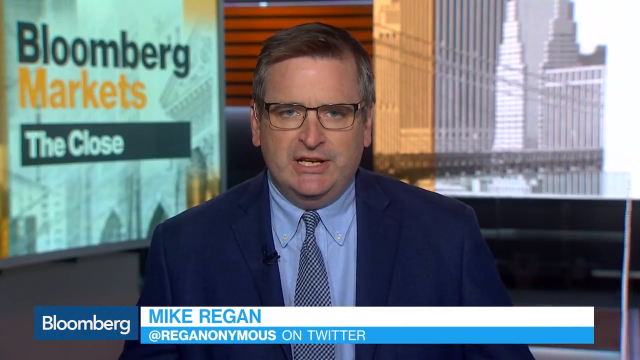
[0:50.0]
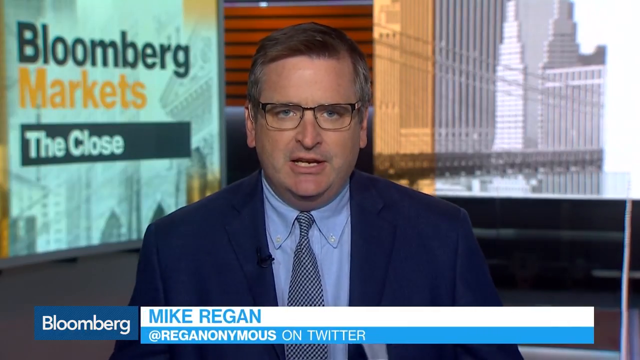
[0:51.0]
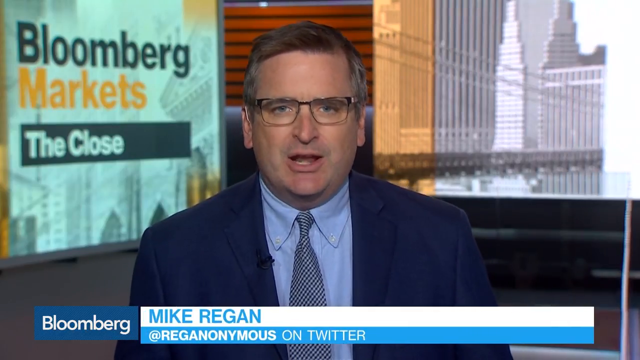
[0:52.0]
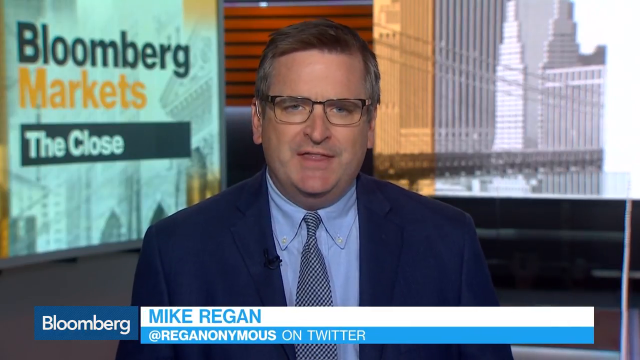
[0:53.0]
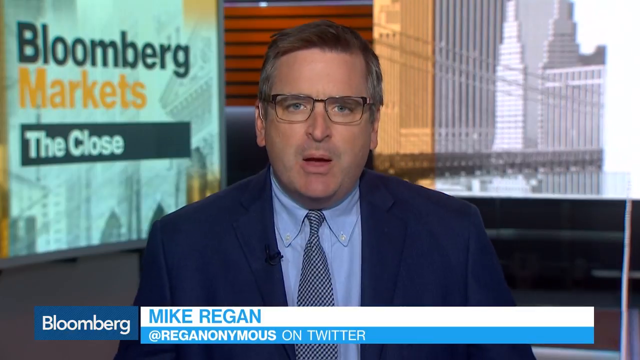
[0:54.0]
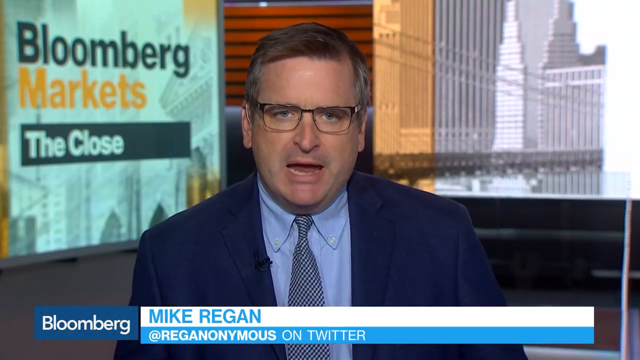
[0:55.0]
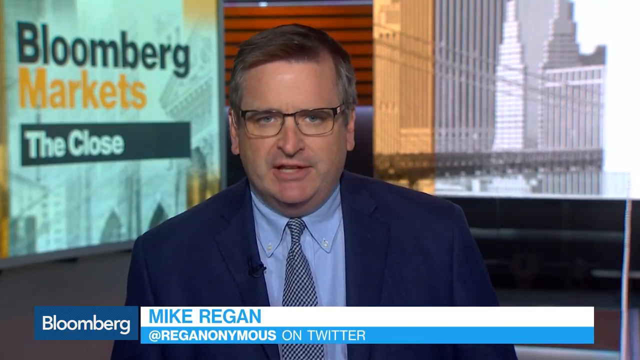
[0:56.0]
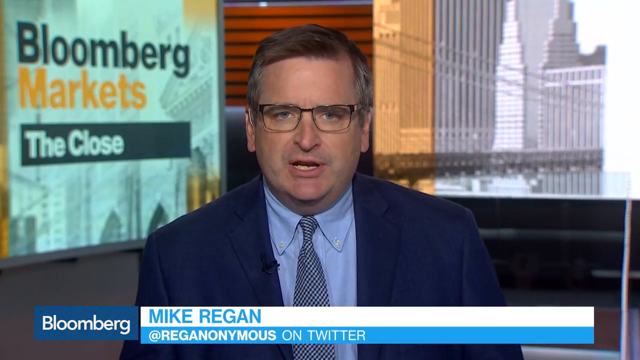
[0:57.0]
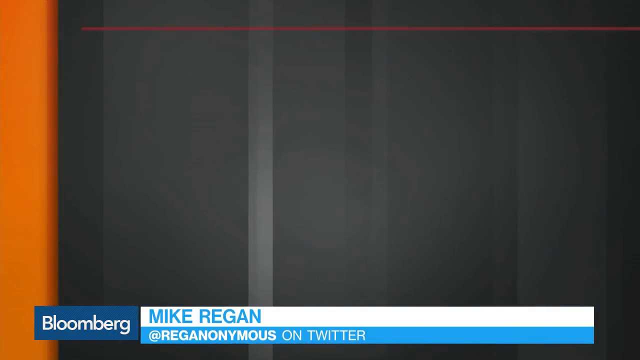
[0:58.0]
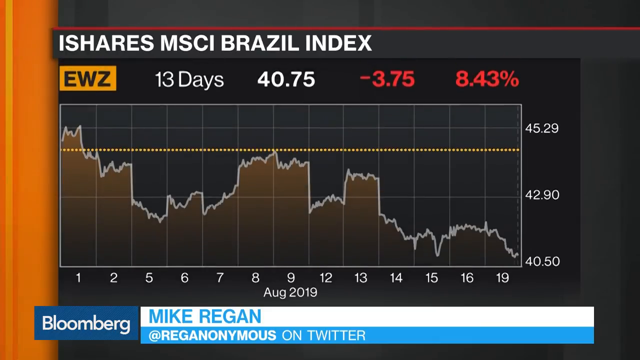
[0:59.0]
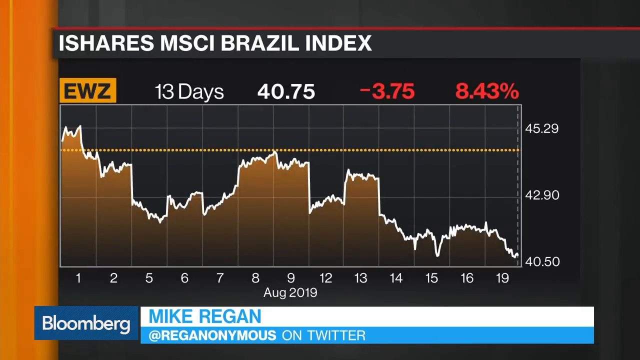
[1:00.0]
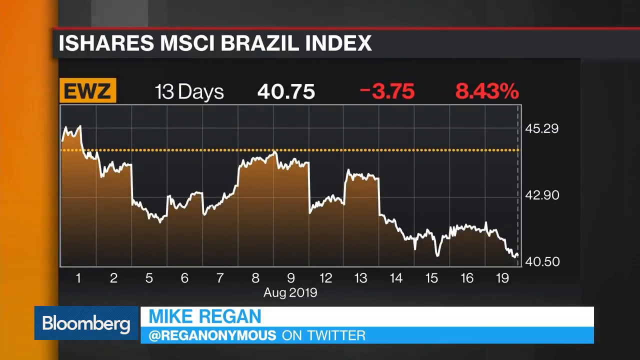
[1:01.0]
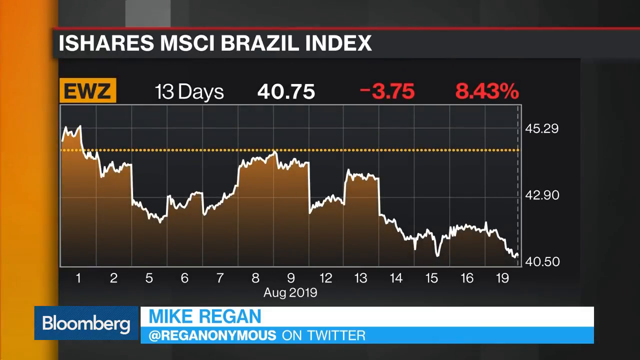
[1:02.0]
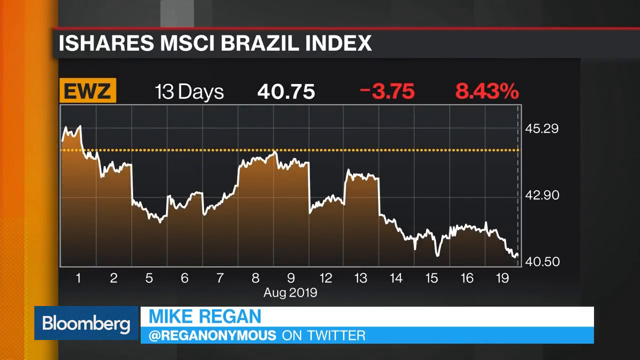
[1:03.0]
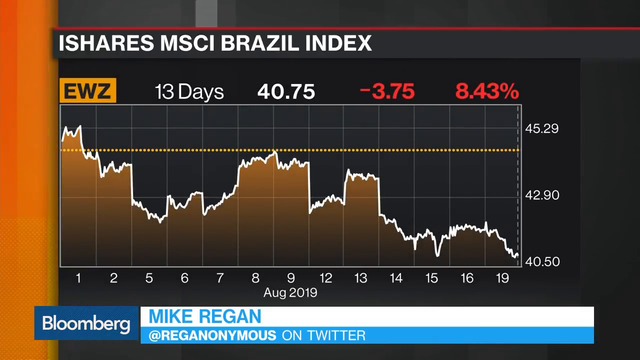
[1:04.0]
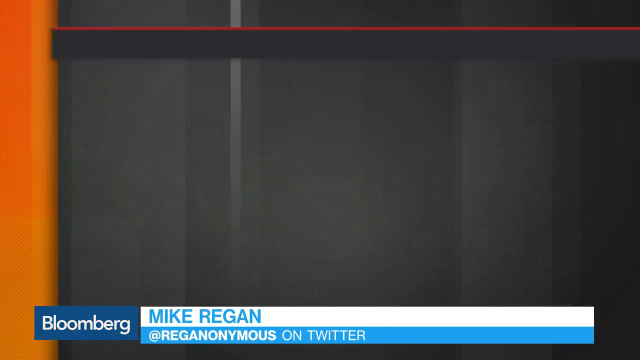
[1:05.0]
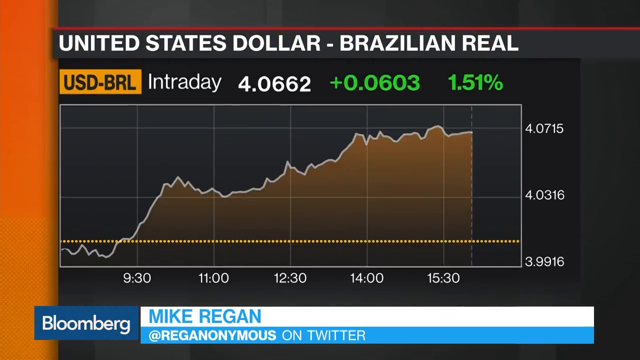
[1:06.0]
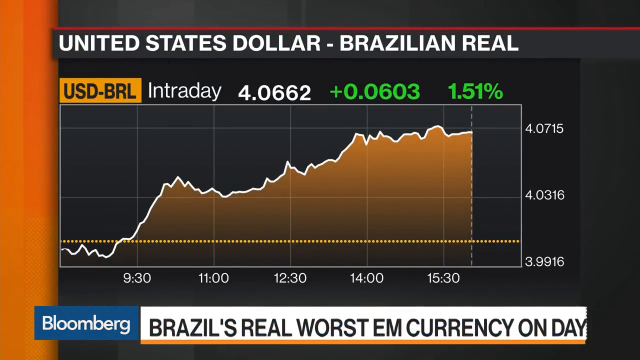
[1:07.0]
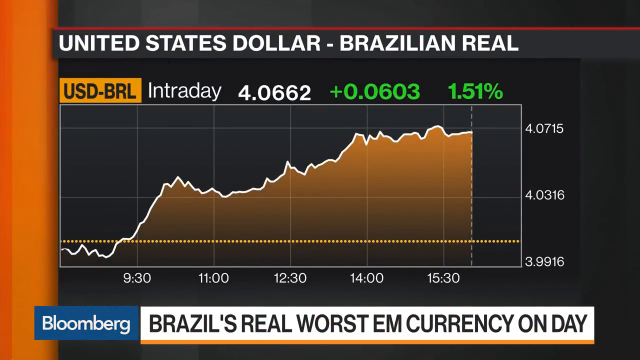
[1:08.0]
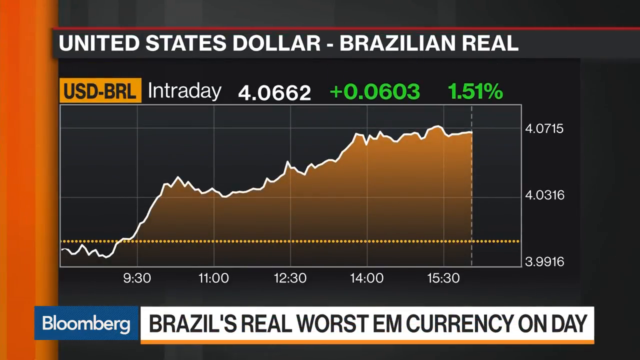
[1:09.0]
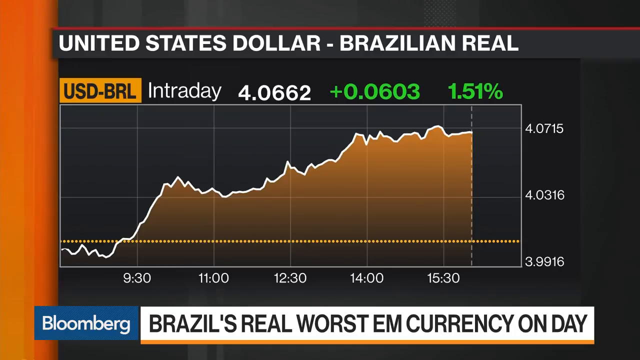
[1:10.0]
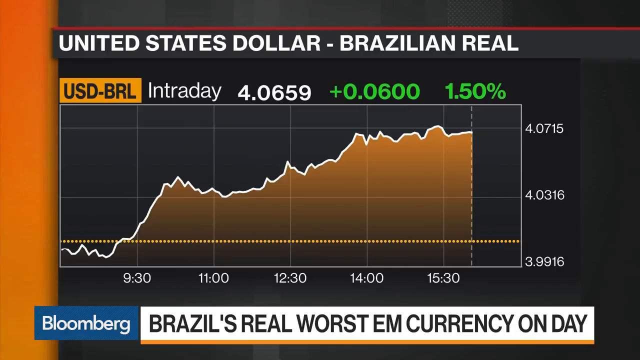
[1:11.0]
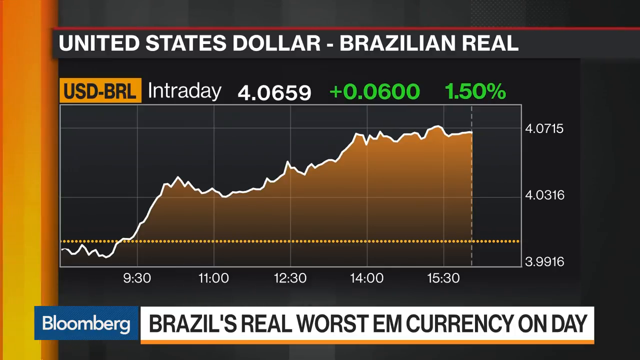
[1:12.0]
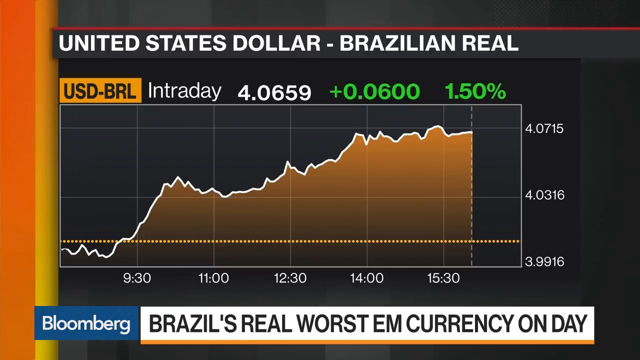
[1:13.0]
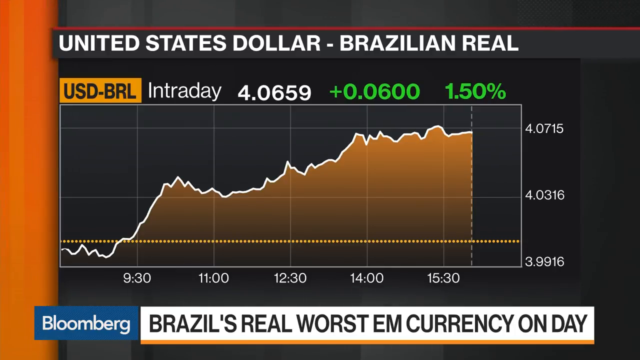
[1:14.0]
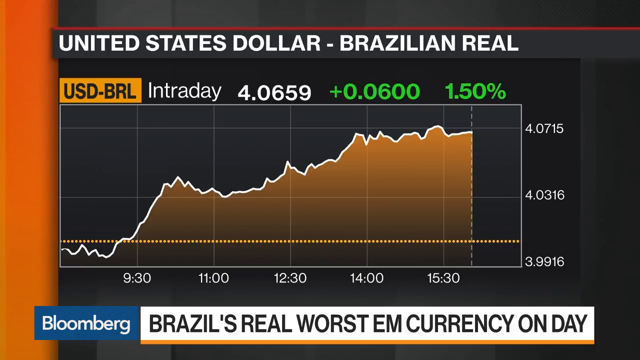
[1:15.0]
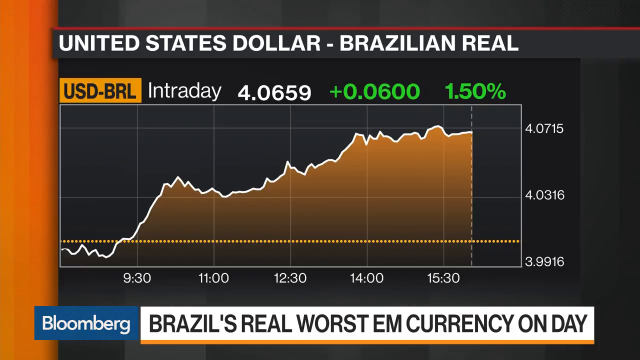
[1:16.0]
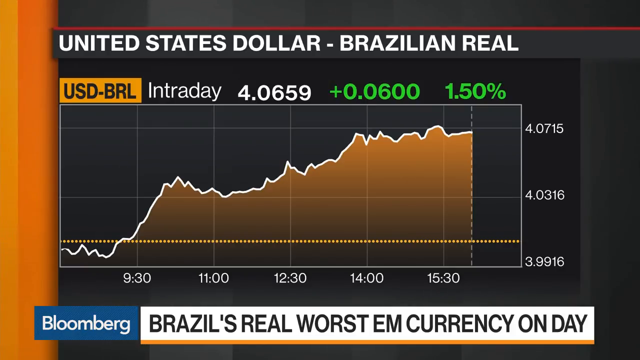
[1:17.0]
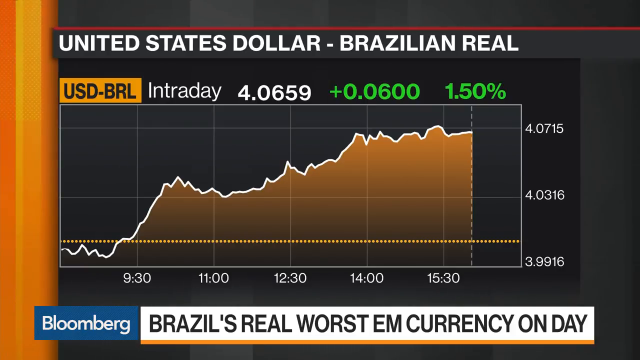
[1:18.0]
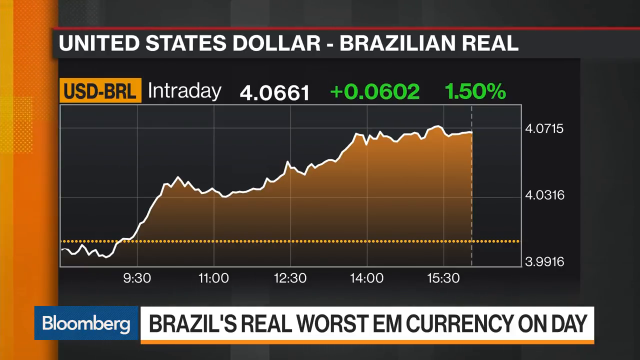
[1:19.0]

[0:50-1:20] A light-skinned man with dark brown, graying hair is at the center of the screen, wearing glasses, a dark blue suit, a lighter blue shirt and a bluish checkered tie. At the bottom left, a blue banner with white text reads "Bloomberg," and a white banner at the bottom center reads "Mike Reagan" in blue text, with his Twitter handle, "Reaganonymous," beneath it in white text on a blue banner. He is sitting in front of a graphic reading "Bloomberg markets the close" over his right shoulder, with "Bloomberg" in black text, "markets" in orange text and "the close" in white text on a black banner. He talks head-on into the camera, gesturing expressively. The view switches to a statistics graph titled "iShares MSCI Brazil Index" in white lettering, with points 1 through 19 along the bottom and values from 40.50 up to 45.29 vertically. At the top left, an orange banner in black lettering reads "EWZ," followed by "13 days" and "40.75" in white, then "-3.75" and "8.43%" in red. The line trends slightly downward, rises between 5 and 6 up to 7 and 8, goes down at 9, drops at 12, rises at 13, drops at 14, hovers at about the same level between 14 and 16, and drops toward 19 at the end. Another graph follows, titled United States dollar and Brazilian real in white lettering, showing an overall upward trend from 9.30 to 15.30, rising from a low of 3.9916 to 4.0715. Black lettering at the bottom reads "Brazil's worst EM currency on day."